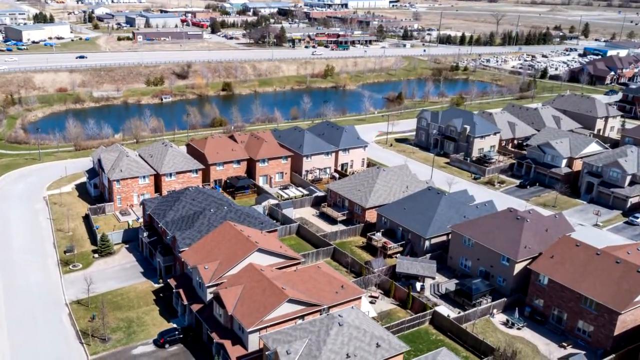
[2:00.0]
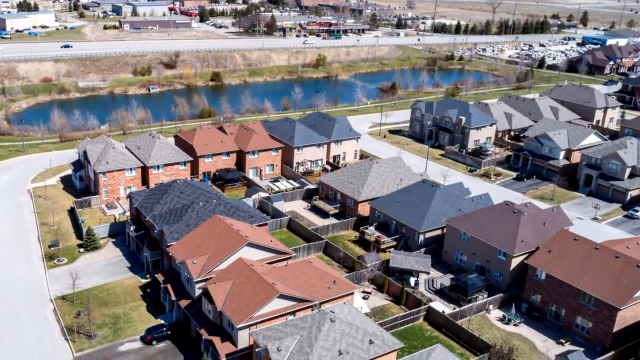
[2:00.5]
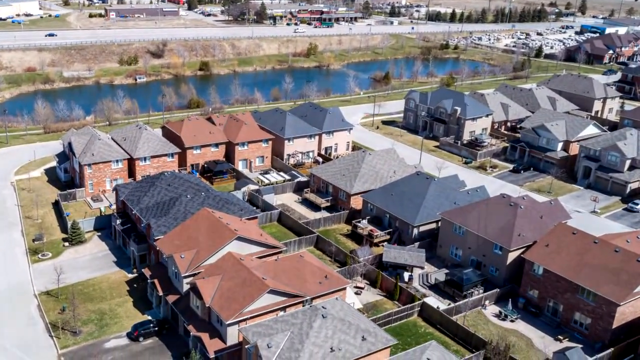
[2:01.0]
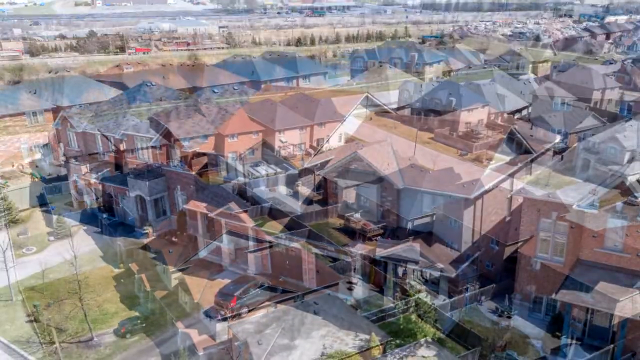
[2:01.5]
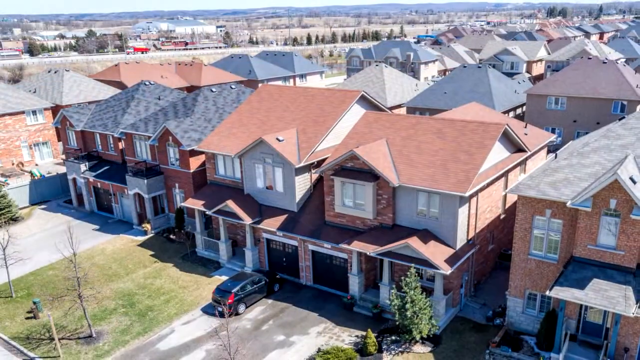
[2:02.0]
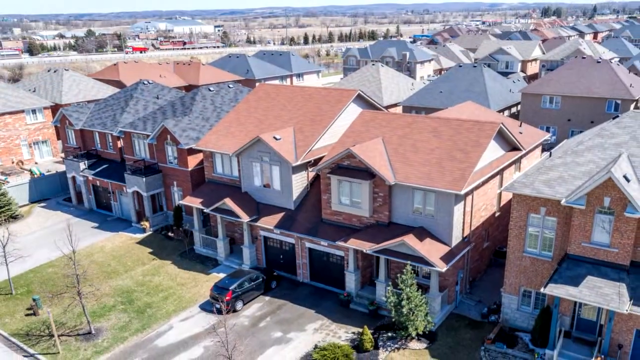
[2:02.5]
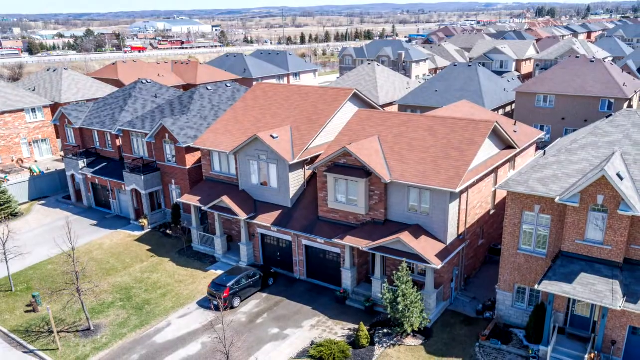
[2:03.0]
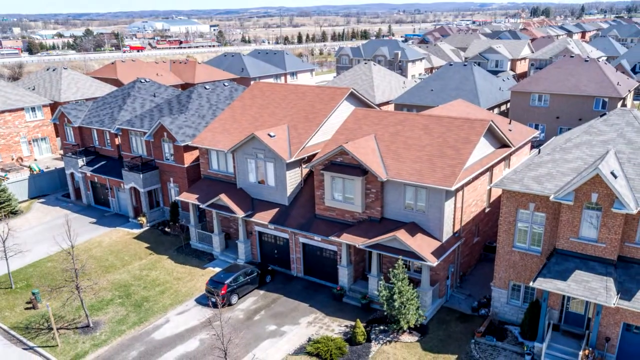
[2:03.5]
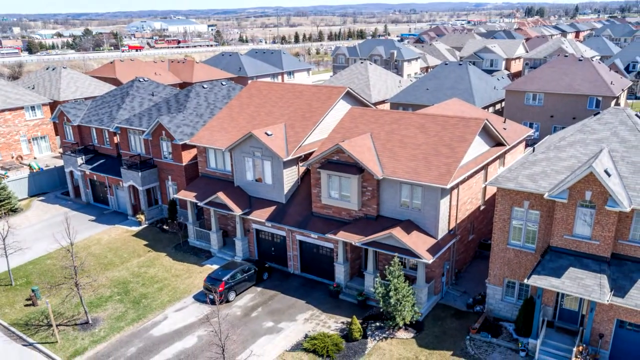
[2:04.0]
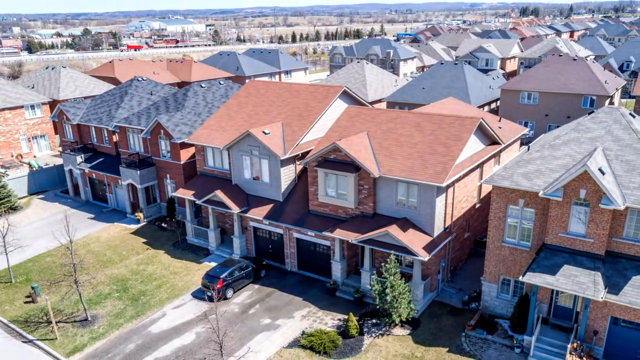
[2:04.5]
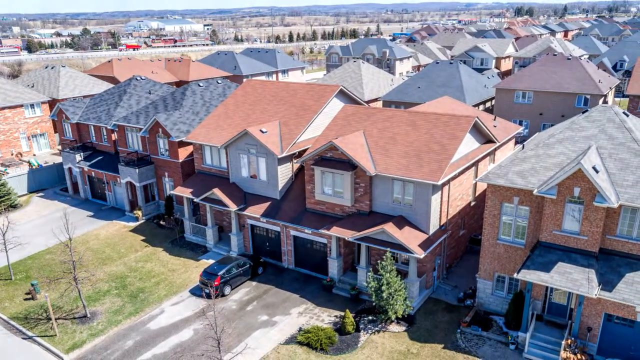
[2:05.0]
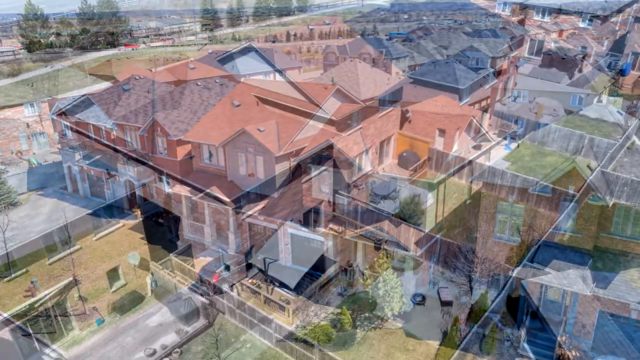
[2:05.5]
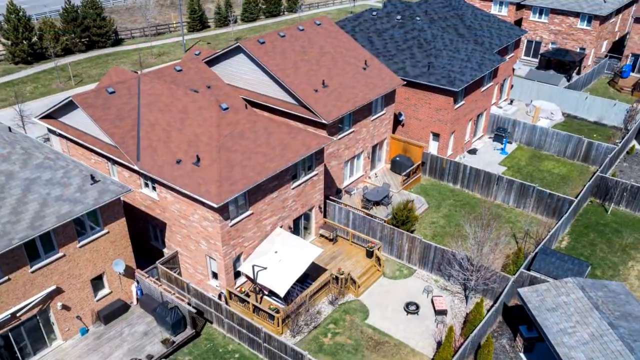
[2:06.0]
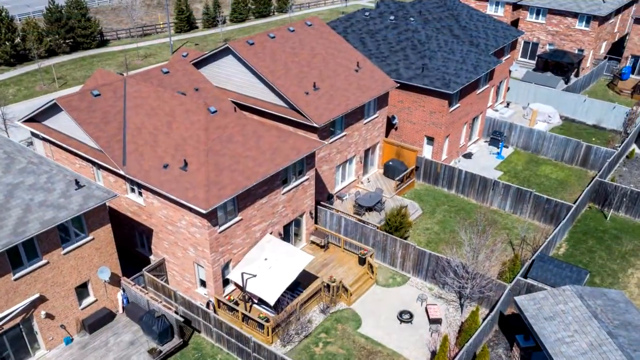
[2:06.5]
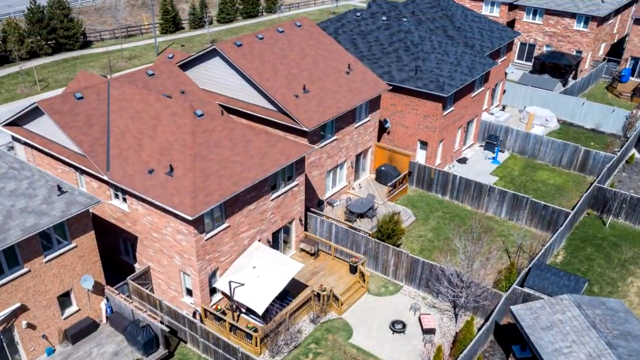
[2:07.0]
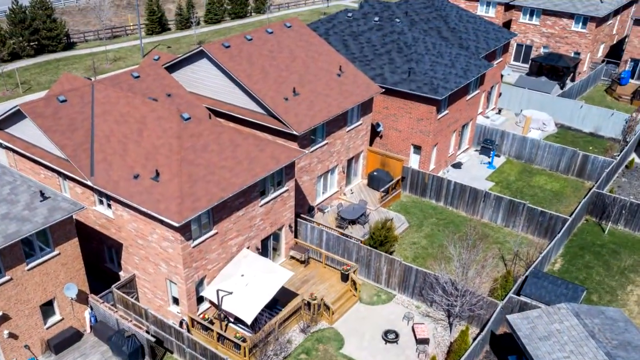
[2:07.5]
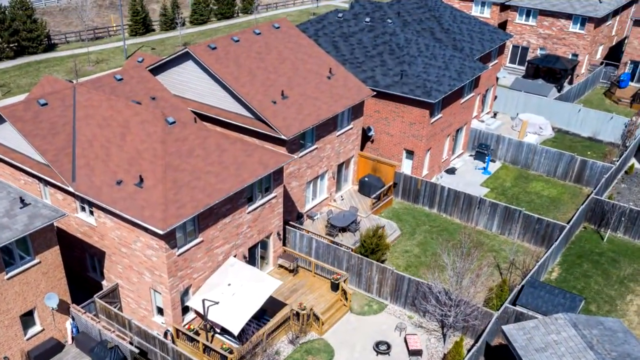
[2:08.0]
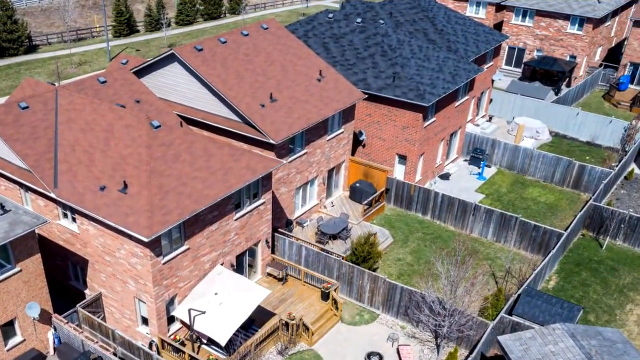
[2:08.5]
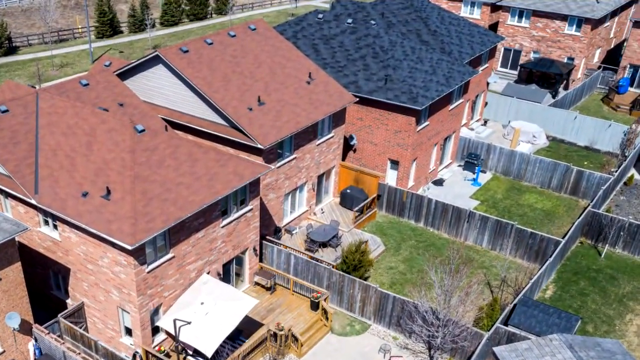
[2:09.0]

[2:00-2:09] An overhead picture shows a suburban neighborhood. The houses all look relatively the same, with brick walls and pointed roofs. Most of them are two stories and of similar size, with wooden fencing around the back. The scene shows different angles of the houses and ends with a close-up view of the front of two of the largest houses relative to the others. The pictures are taken in the daytime, with sun shining down on the lawns and houses and some shadows present. There are sparse trees in the front yards, which look newly planted and small.